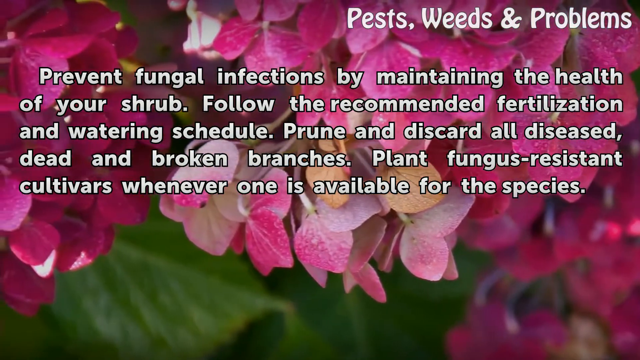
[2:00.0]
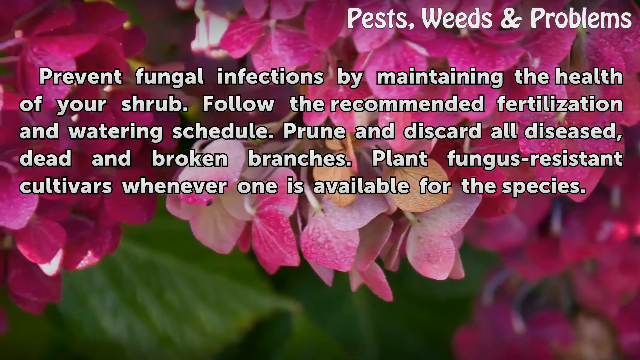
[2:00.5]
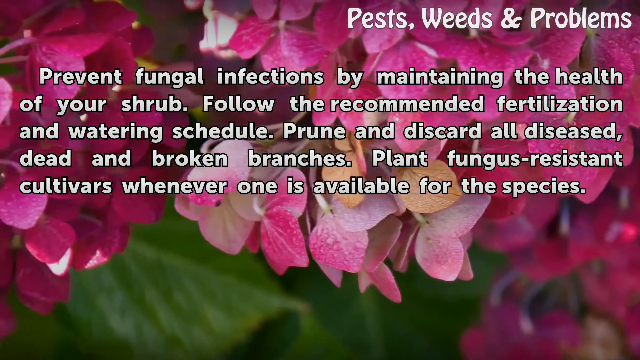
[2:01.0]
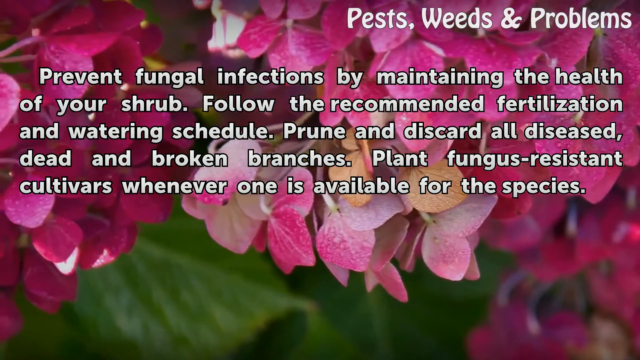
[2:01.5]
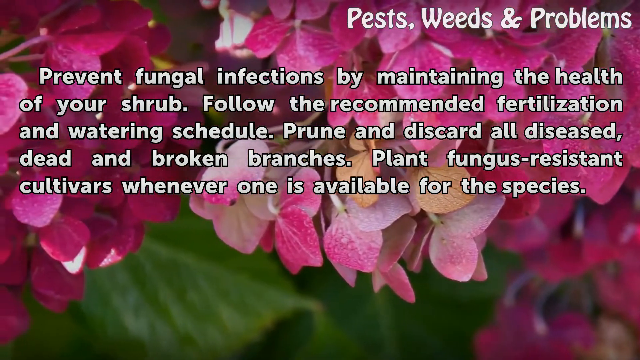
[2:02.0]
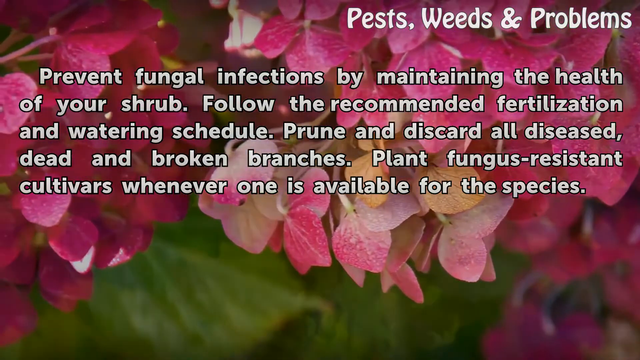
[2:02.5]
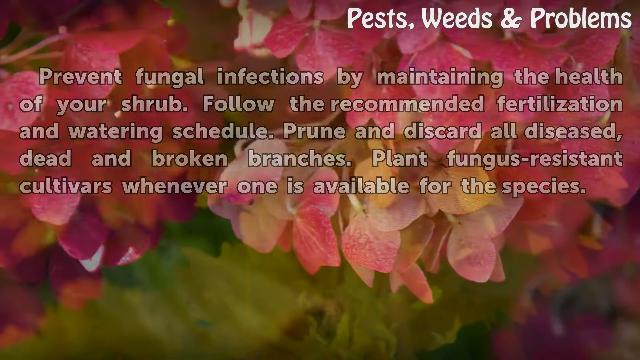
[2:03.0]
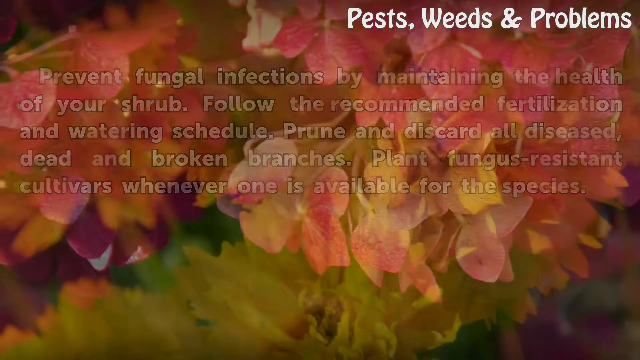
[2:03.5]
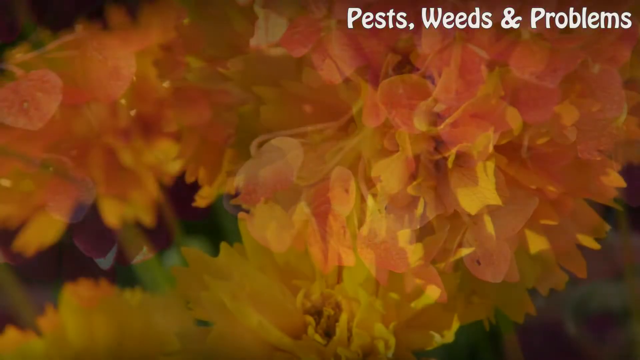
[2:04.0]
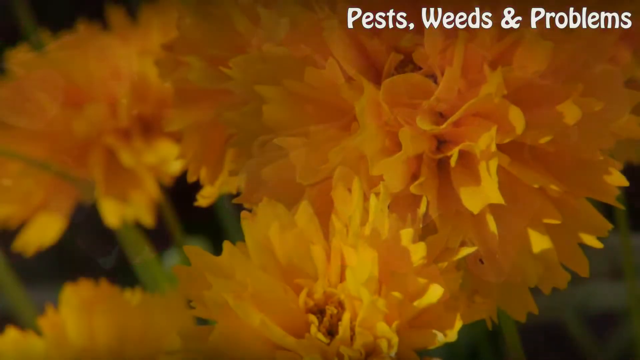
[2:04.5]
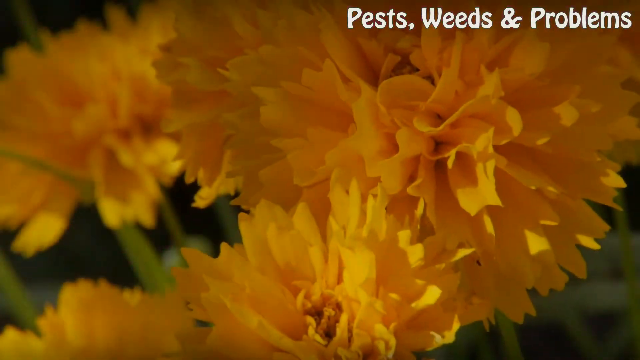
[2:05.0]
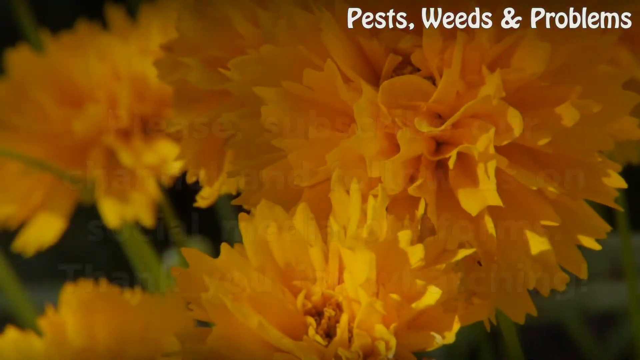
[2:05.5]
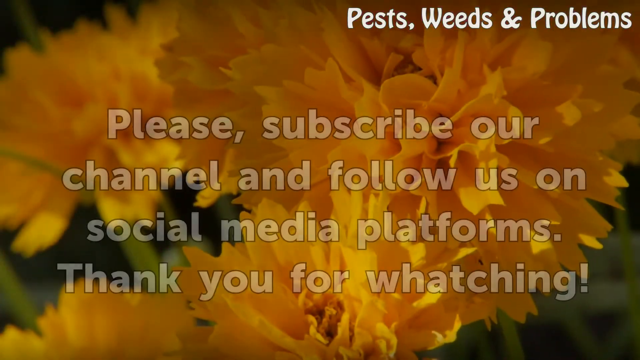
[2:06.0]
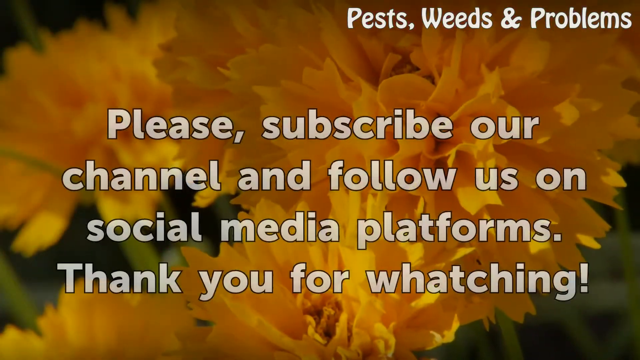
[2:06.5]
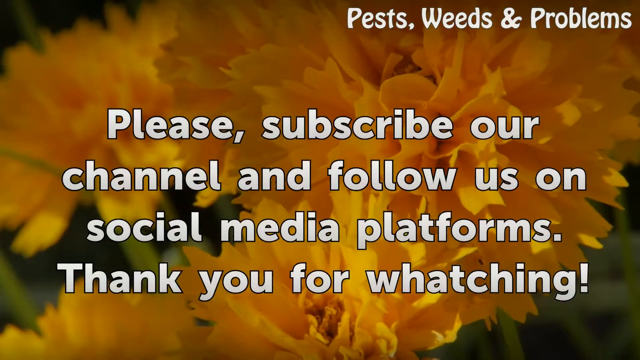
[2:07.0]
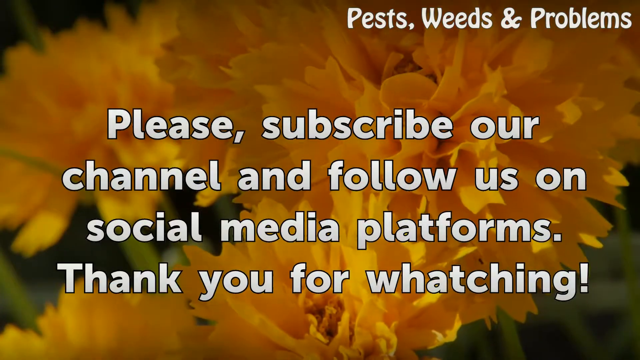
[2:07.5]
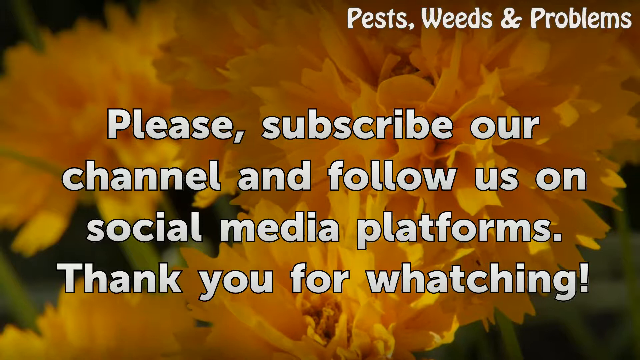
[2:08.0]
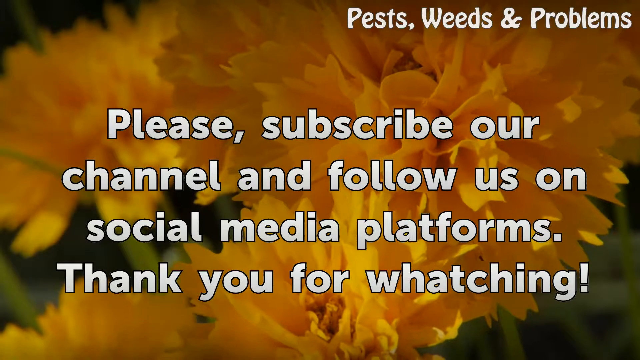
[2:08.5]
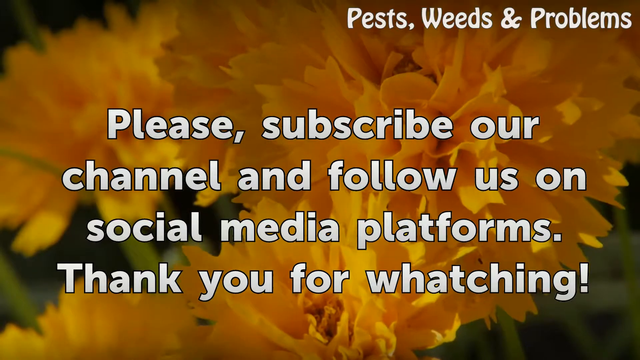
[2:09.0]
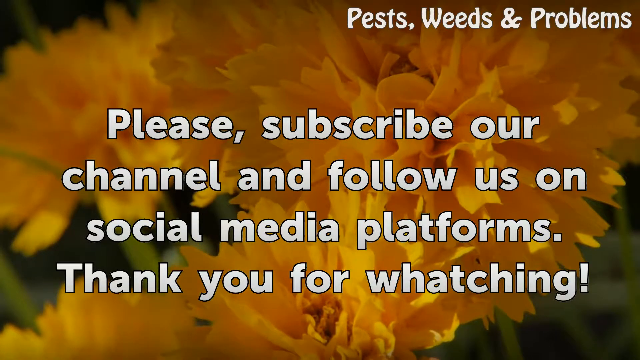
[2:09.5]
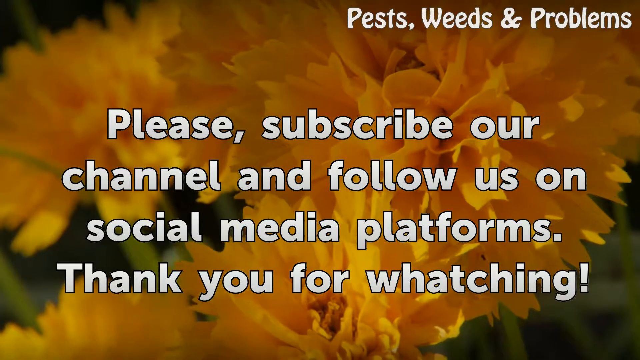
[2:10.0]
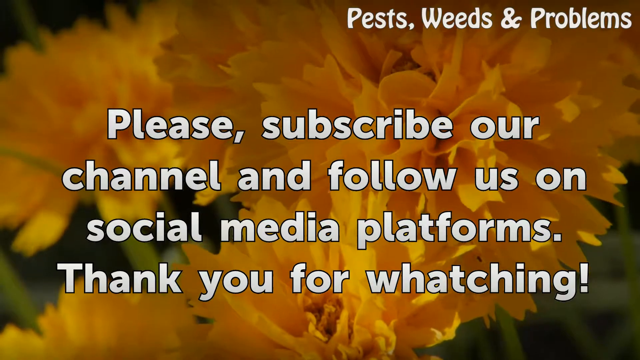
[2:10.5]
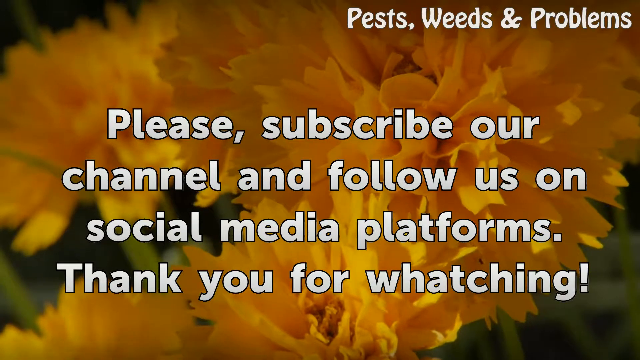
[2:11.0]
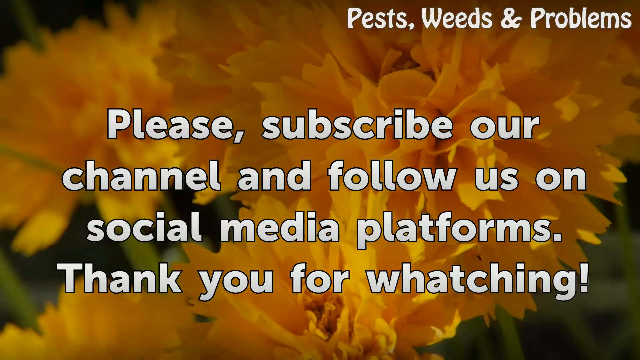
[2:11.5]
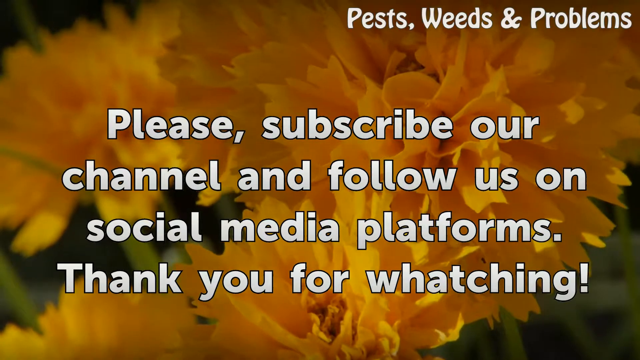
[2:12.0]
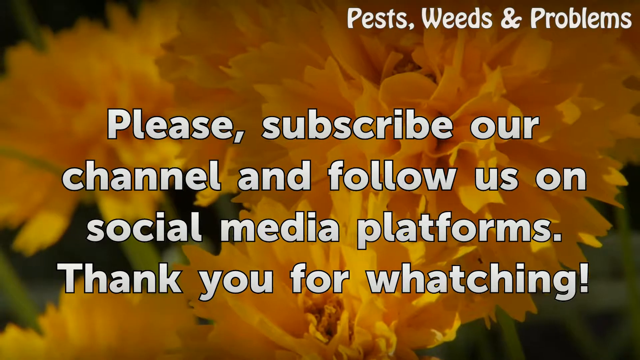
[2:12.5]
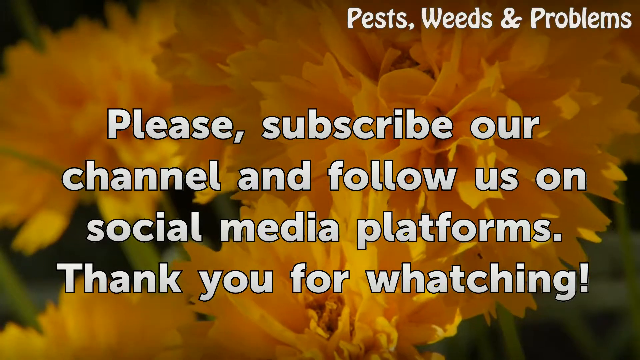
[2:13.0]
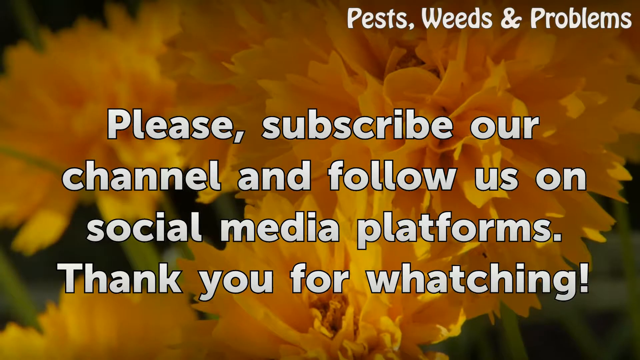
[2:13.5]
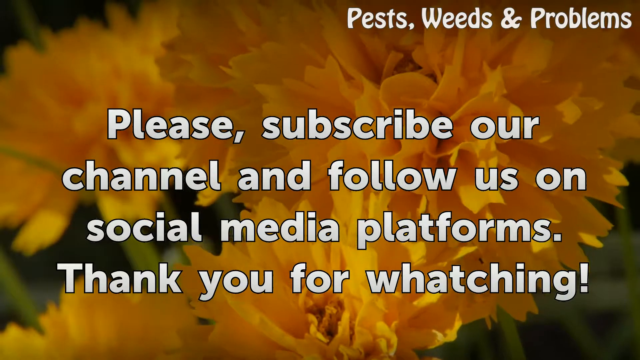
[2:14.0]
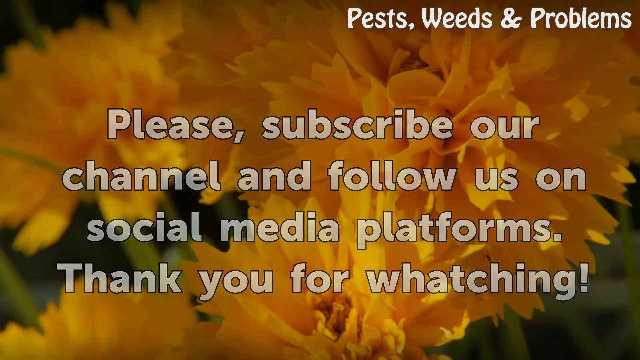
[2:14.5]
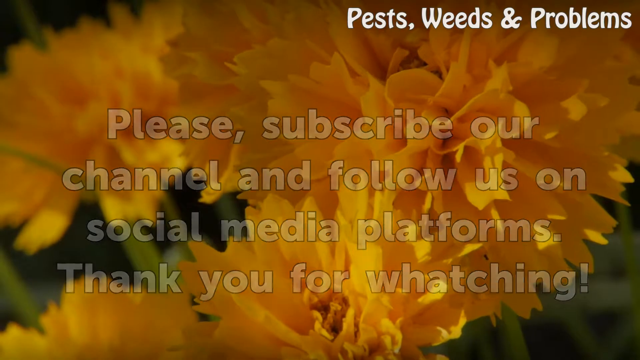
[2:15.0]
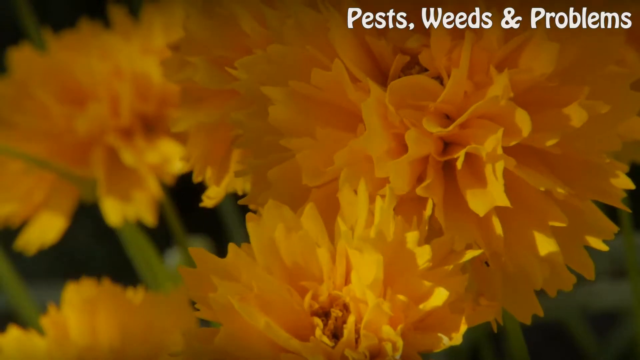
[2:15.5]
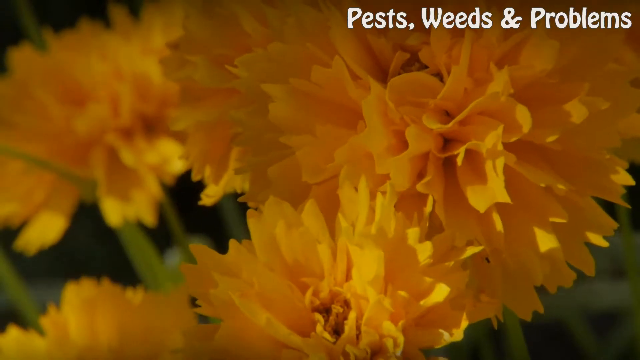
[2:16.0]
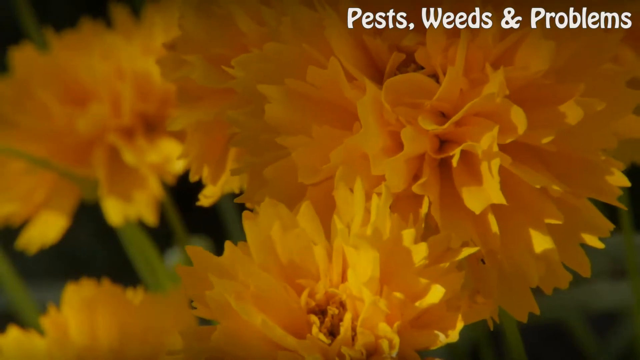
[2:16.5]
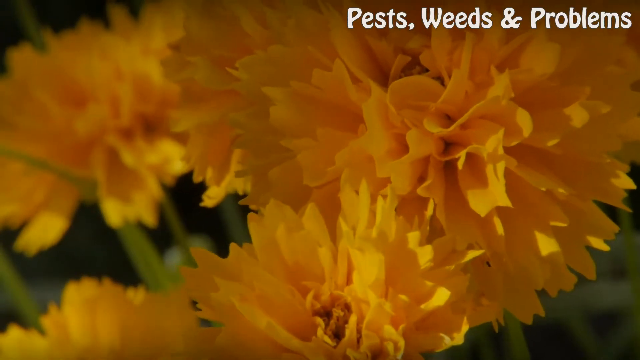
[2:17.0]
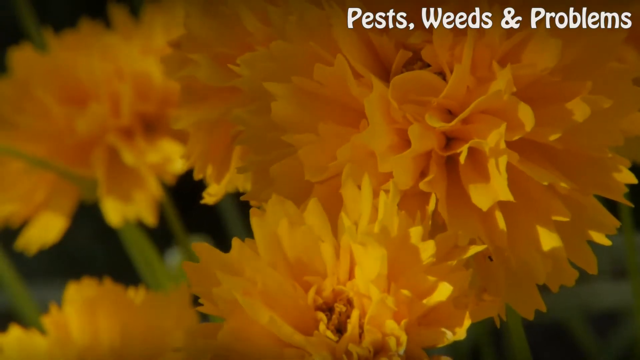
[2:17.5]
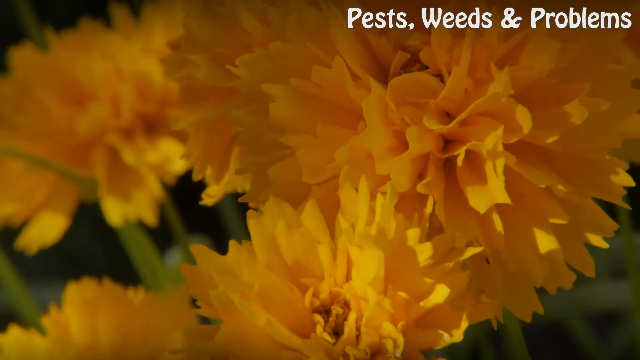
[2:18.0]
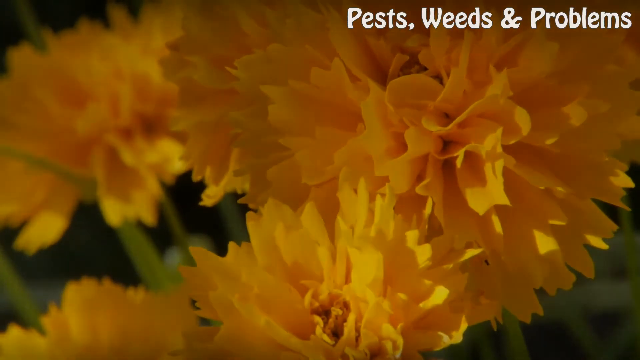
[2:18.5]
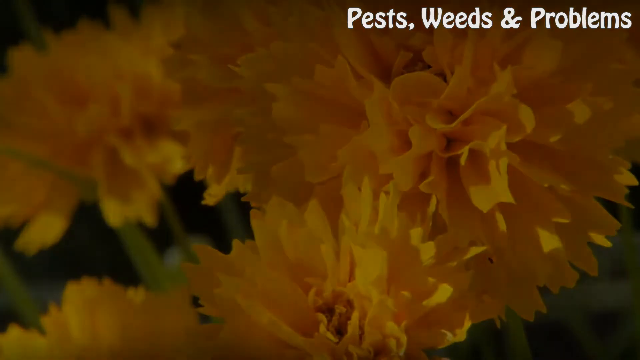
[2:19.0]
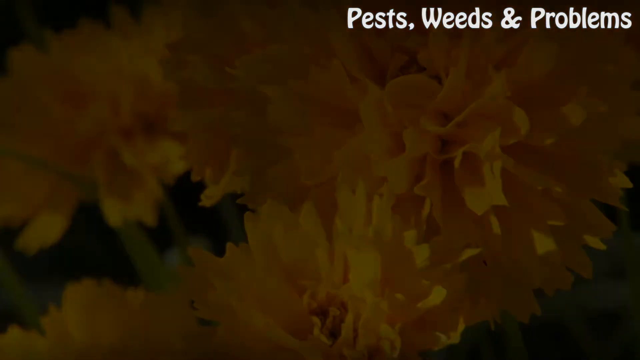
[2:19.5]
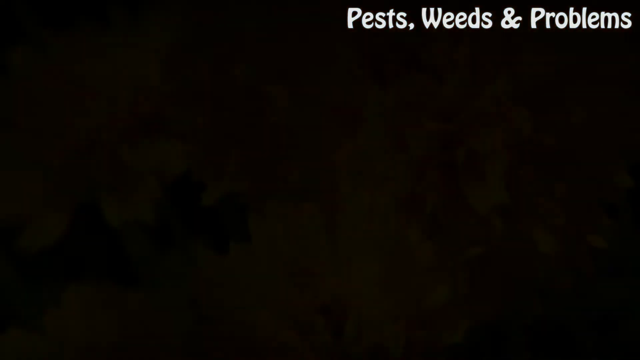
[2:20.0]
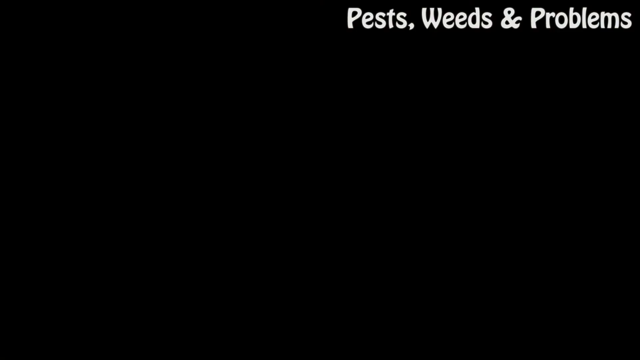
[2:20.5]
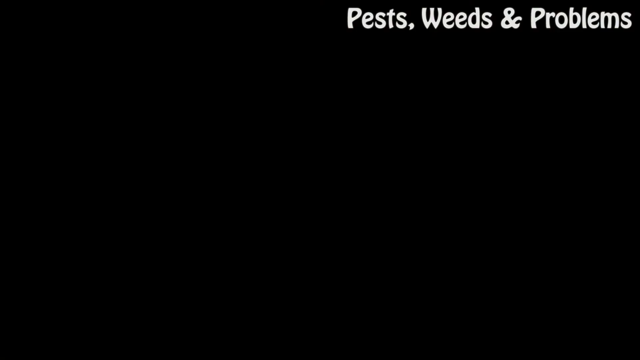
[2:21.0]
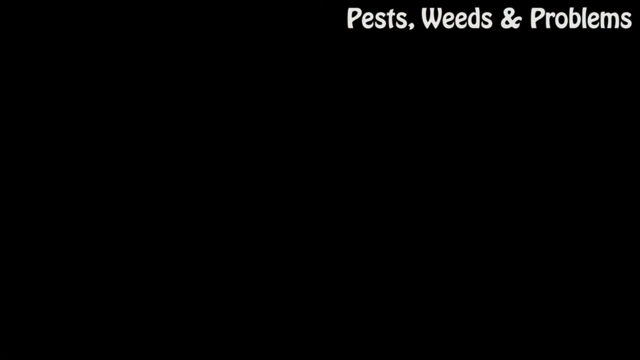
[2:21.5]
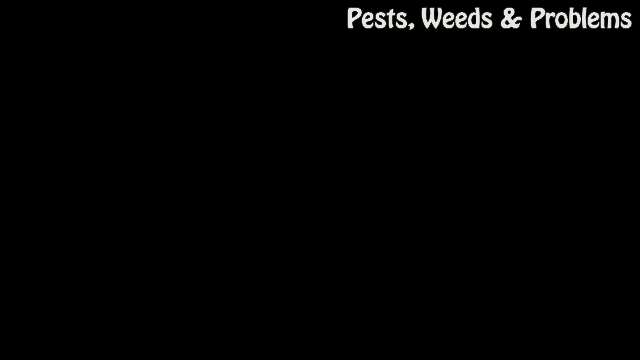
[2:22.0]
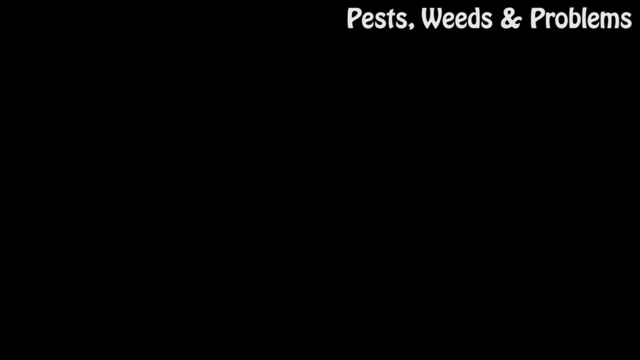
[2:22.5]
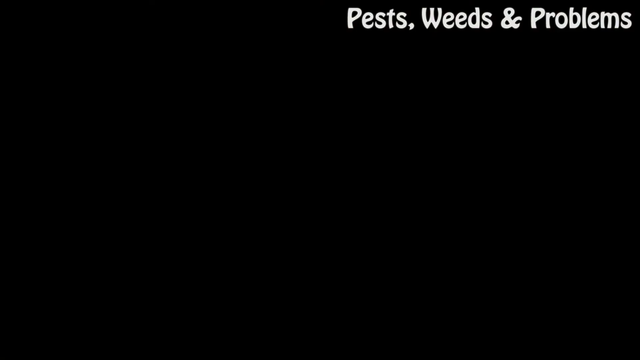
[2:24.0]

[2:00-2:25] Pink and white petals are clustered across the top and middle of the screen, with blurry green leaves in the background. The words "Pest, Weeds, and Problems" in white letters are in the top right-hand corner and remain on the screen the whole time. Five lines of text are overlaid on the flowers: "Prevent fungal infections by maintaining the health", "of your shrub. Follow the recommended fertilization", "and watering schedule. Prune and discard all diseased", "dead and broken branches. Plant fungus-resistant" and "cultivars whenever one is available for the species." As the words slowly fade out, the background changes to a close-up view of soft, orange-colored flowers with very vaguely visible blurry green leaves behind them. Four lines of text appear in the middle of the screen: "Please, subscribe our", "channel and follow us on", "social media platforms," and "Thank you for watching!" This stays on the screen for a few more seconds before fading out, and the screen then slowly fades to black.